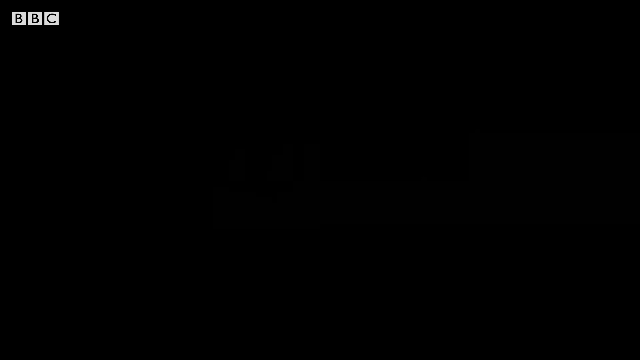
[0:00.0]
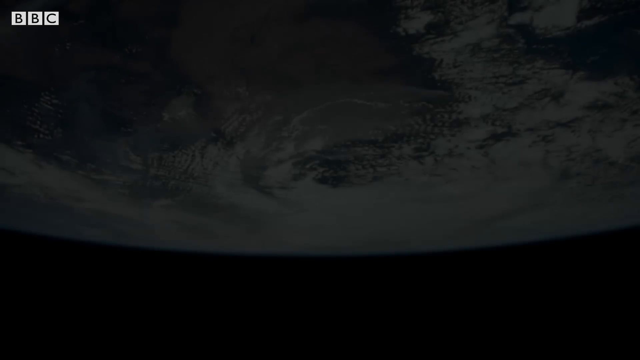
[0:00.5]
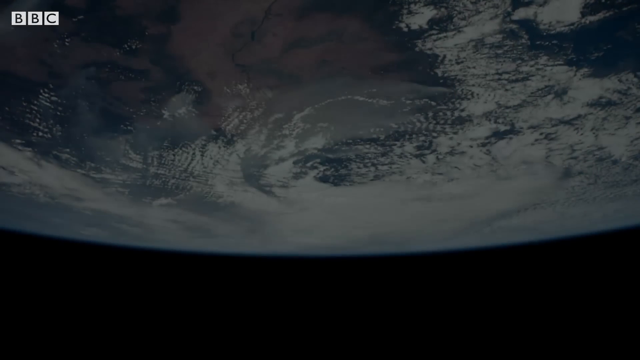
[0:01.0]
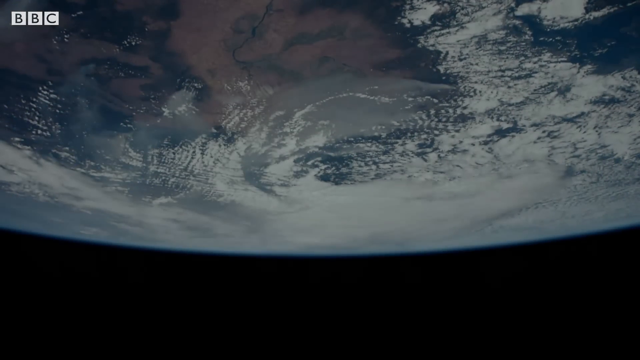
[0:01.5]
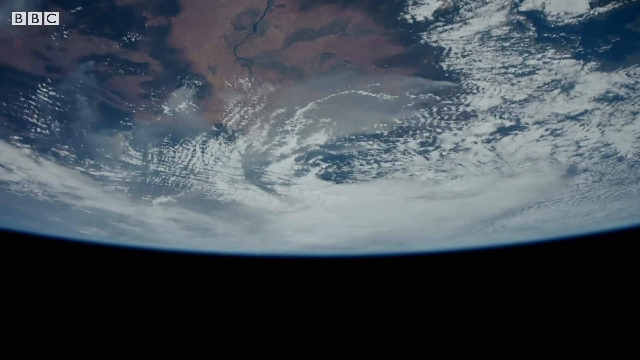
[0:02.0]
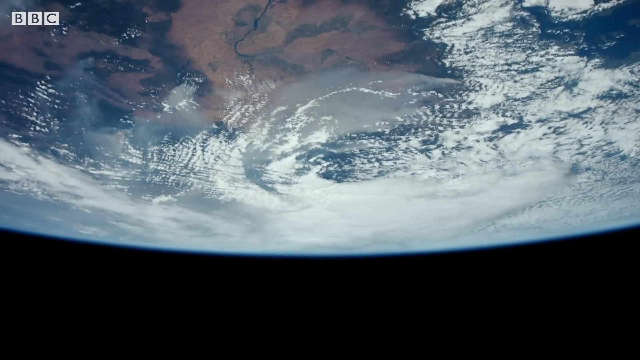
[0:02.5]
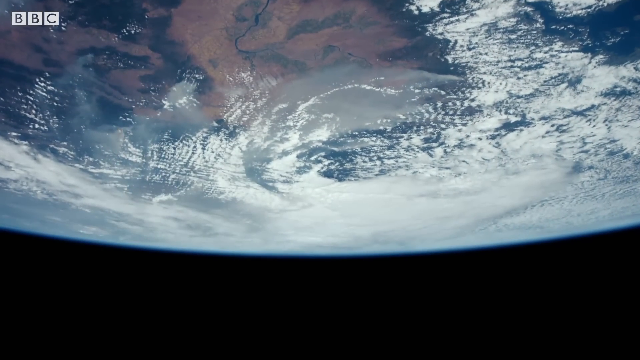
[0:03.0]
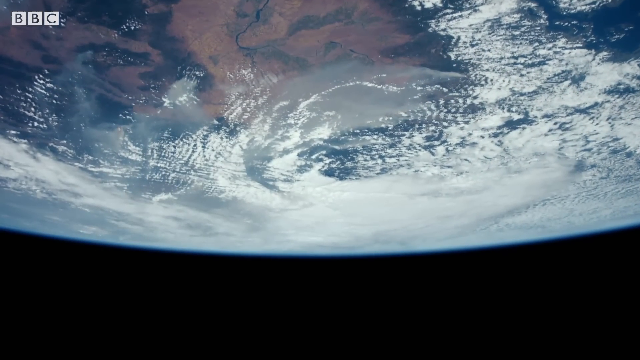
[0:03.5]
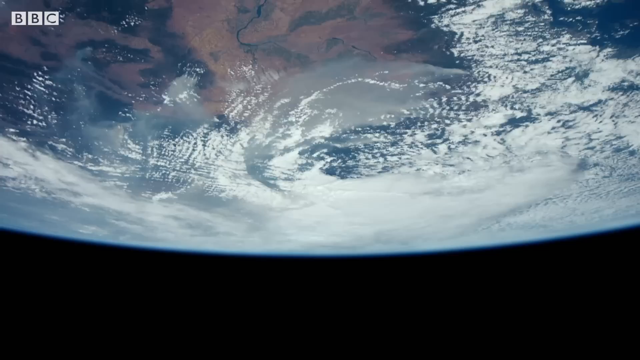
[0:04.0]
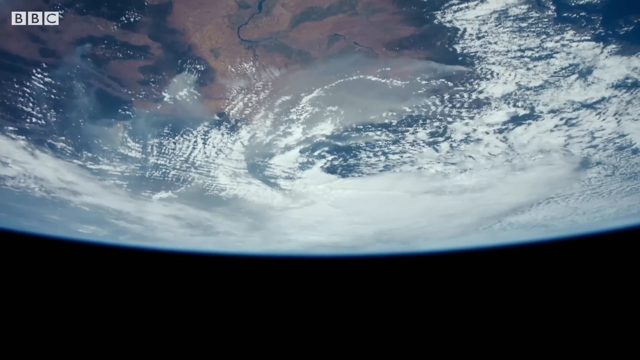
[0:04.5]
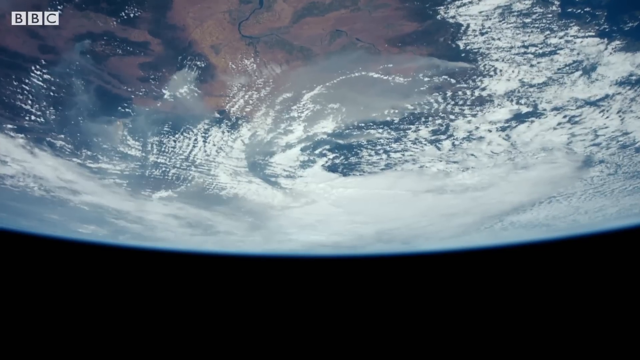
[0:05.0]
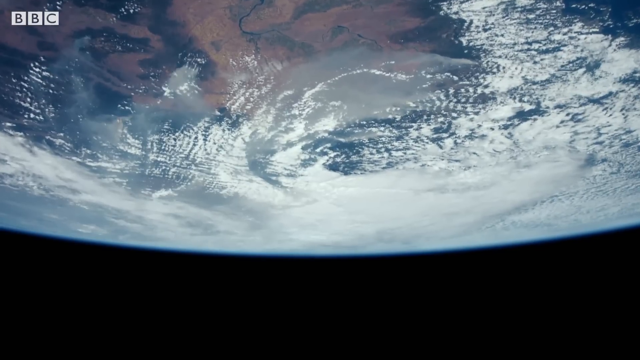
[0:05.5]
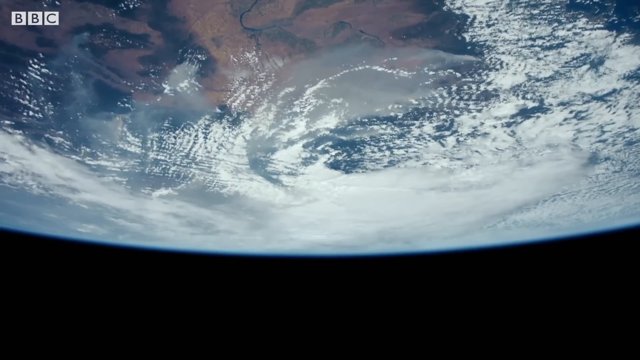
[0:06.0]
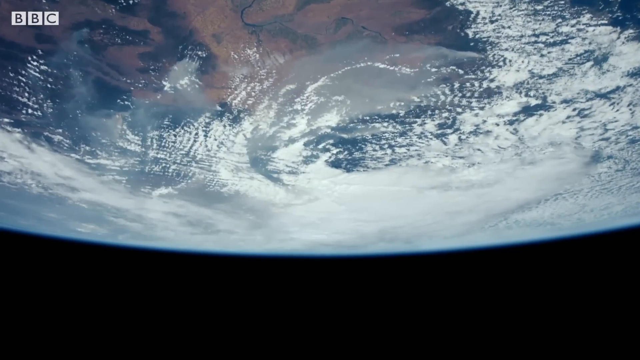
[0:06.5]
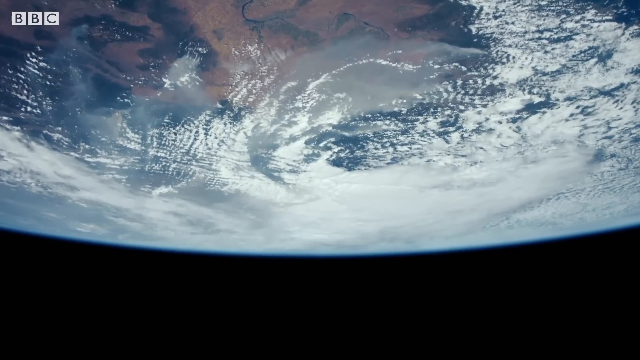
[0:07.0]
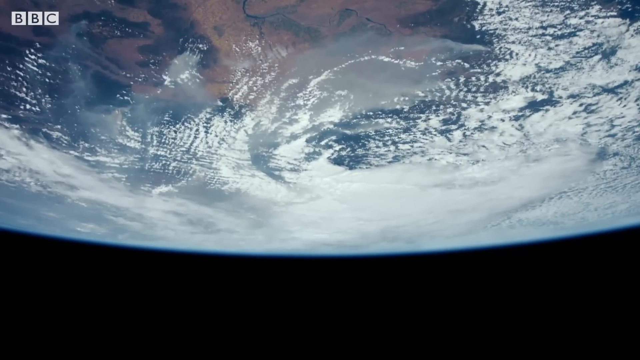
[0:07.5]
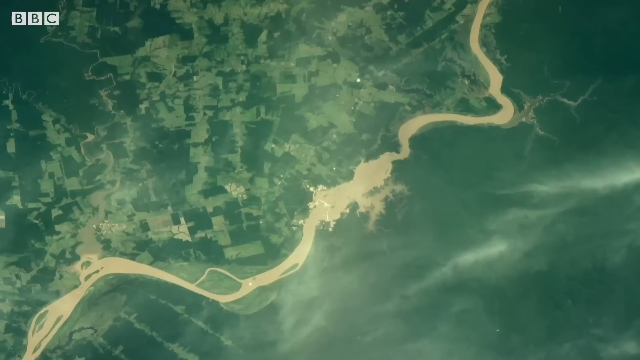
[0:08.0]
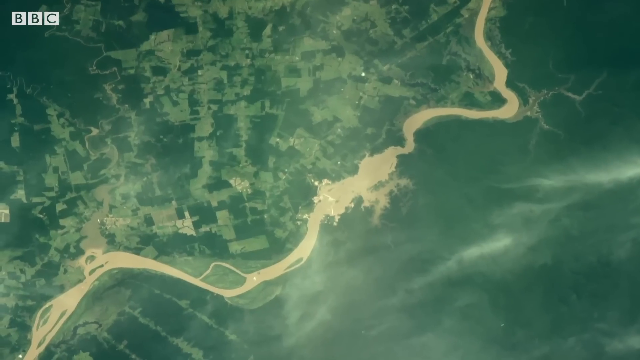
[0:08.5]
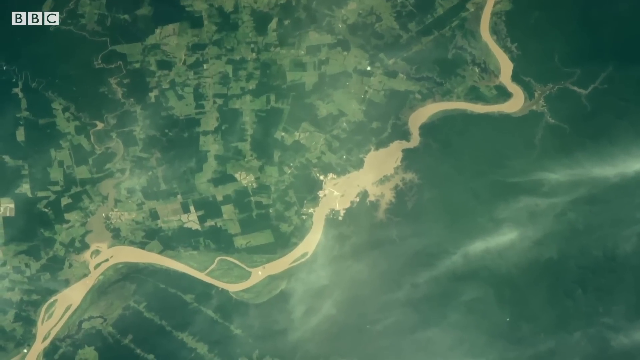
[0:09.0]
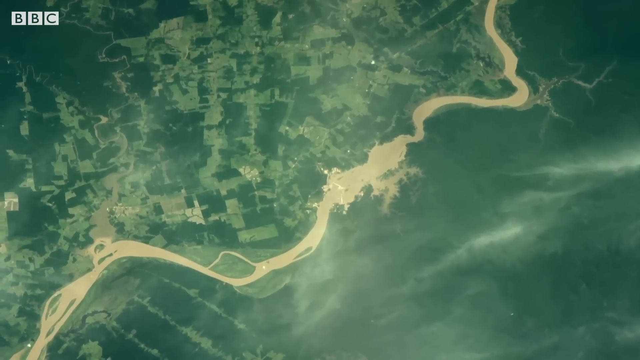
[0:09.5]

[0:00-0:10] The video opens with a view of planet Earth from directly below, as if flying underneath it and looking straight up toward it, almost like orbiting around it. The background is mostly darkness, pure black space, and the Earth shows white clouds, blue water and some green land. A transition leads to a top-down view of what looks to be a beach, with a lot of sand that kind of curves around the shore, the roofs of several houses, and water crashing into the beach. The overall picture is very green, a kind of darkish pale green, and some light clouds are reflected in the water.